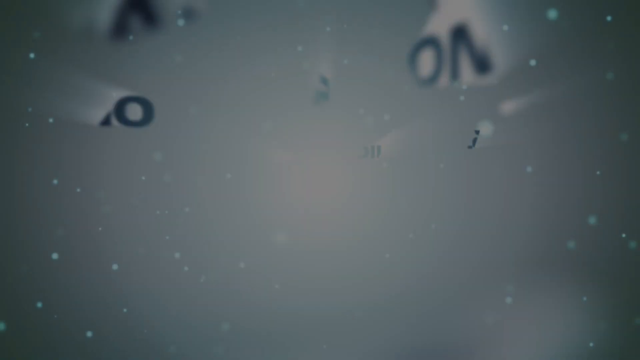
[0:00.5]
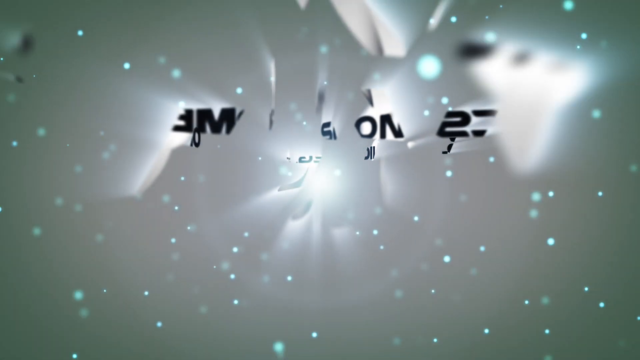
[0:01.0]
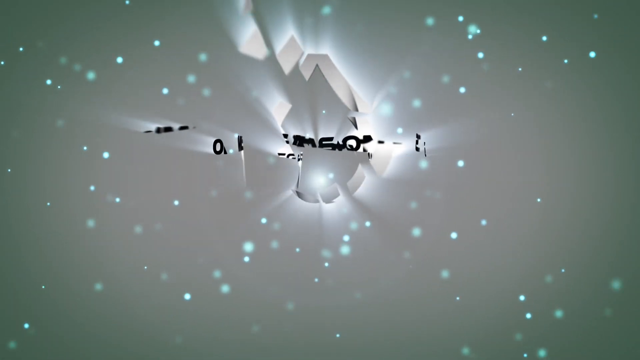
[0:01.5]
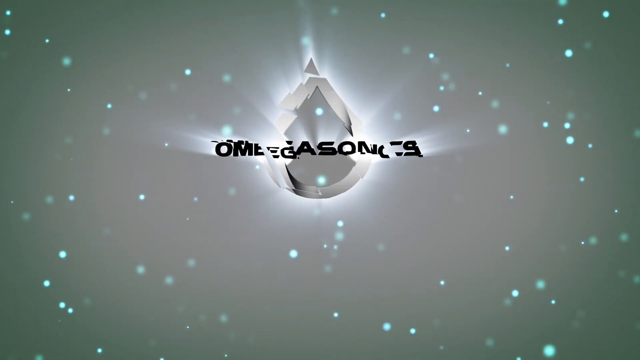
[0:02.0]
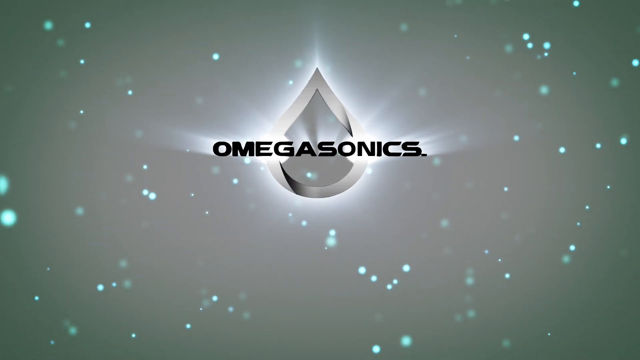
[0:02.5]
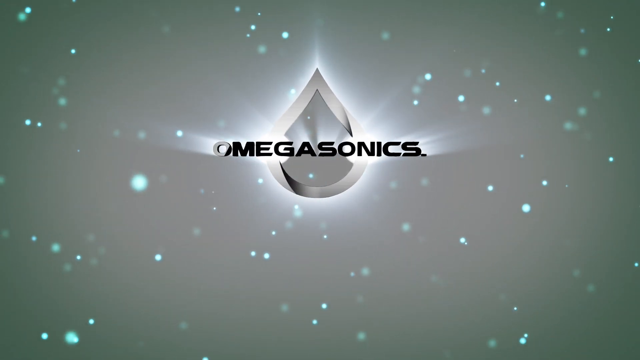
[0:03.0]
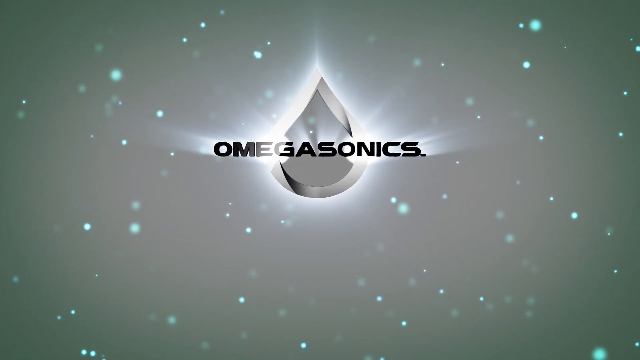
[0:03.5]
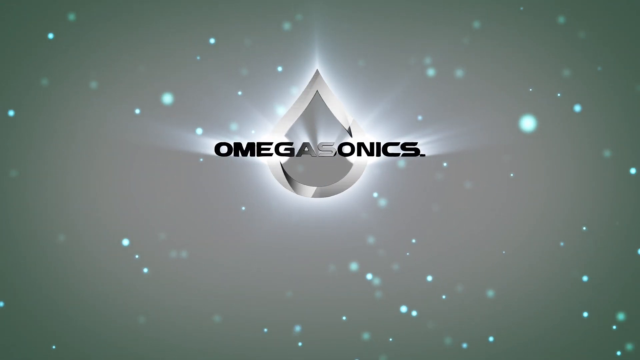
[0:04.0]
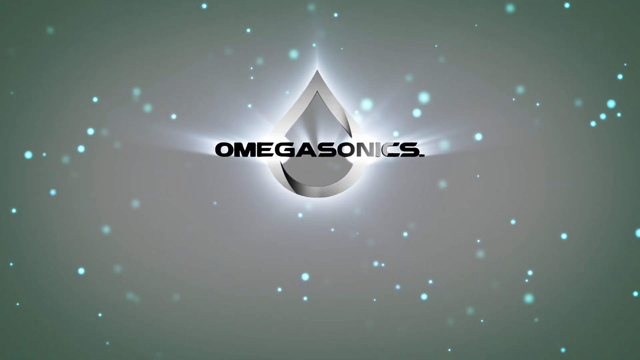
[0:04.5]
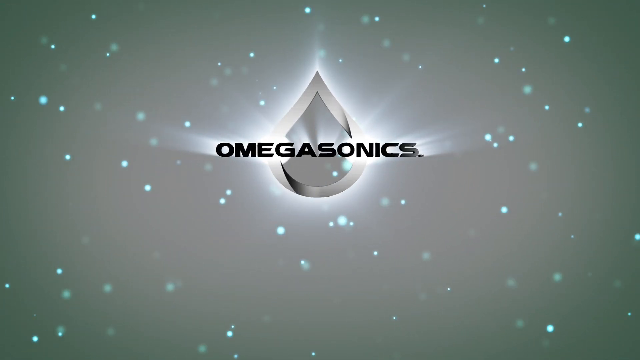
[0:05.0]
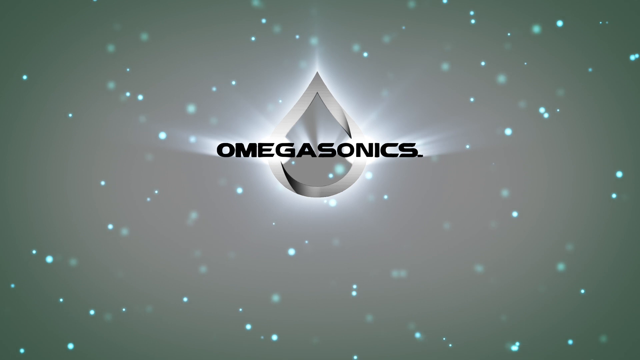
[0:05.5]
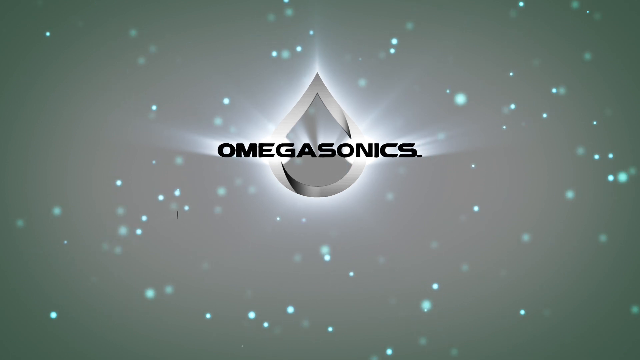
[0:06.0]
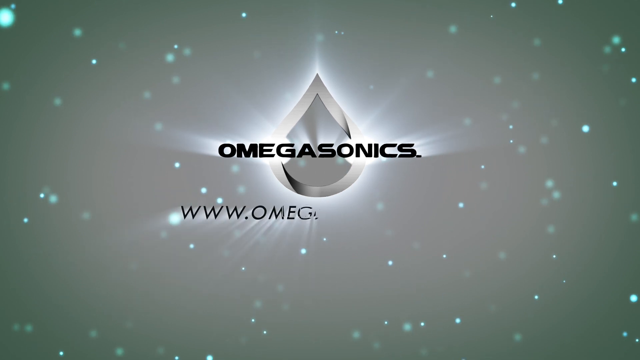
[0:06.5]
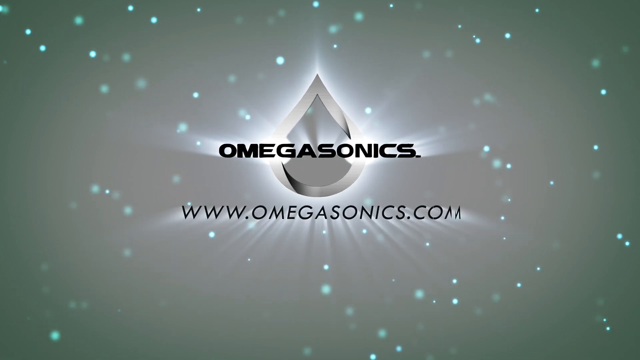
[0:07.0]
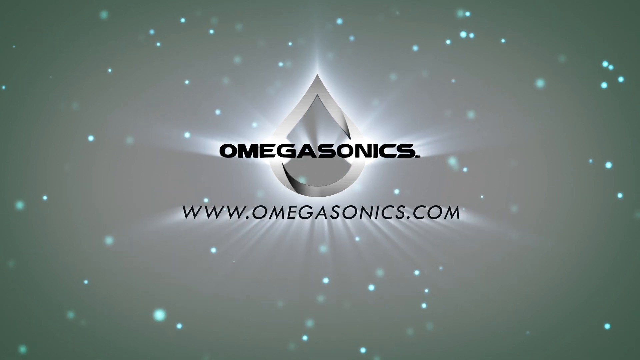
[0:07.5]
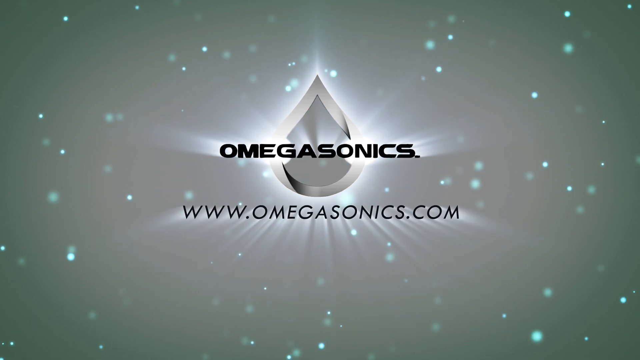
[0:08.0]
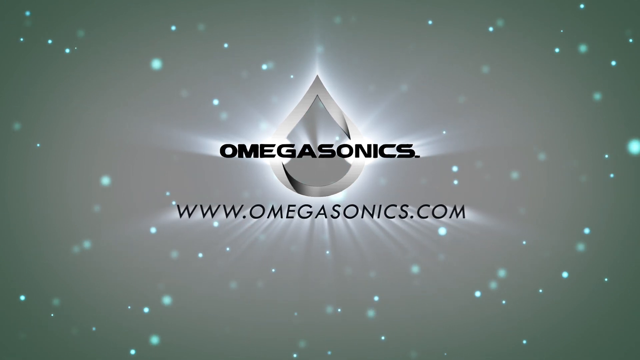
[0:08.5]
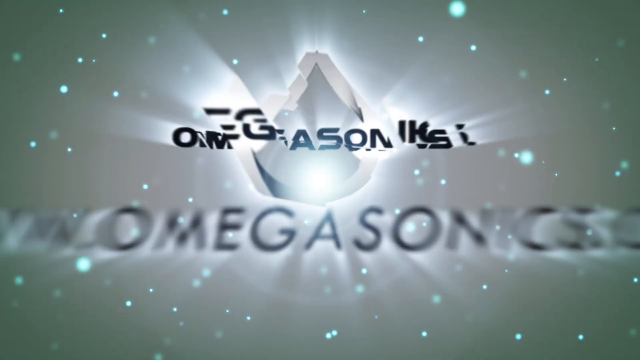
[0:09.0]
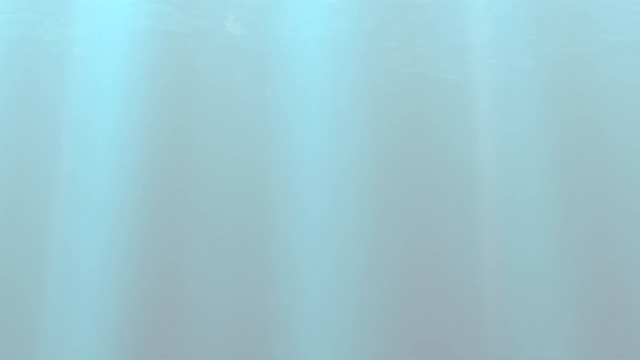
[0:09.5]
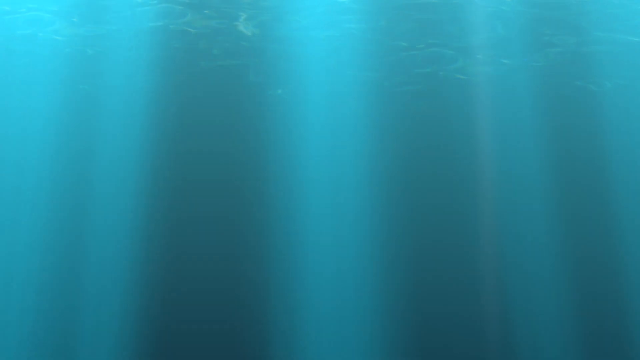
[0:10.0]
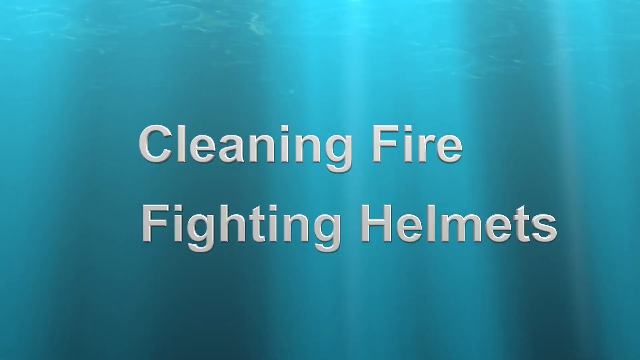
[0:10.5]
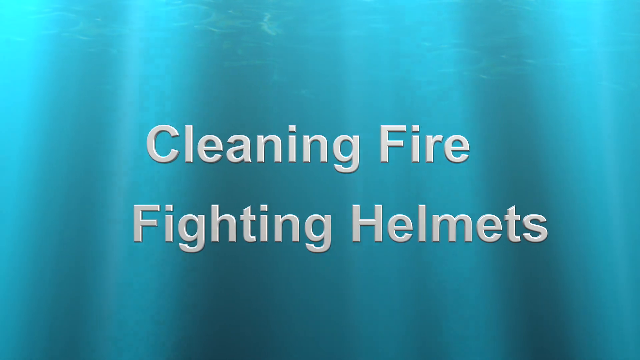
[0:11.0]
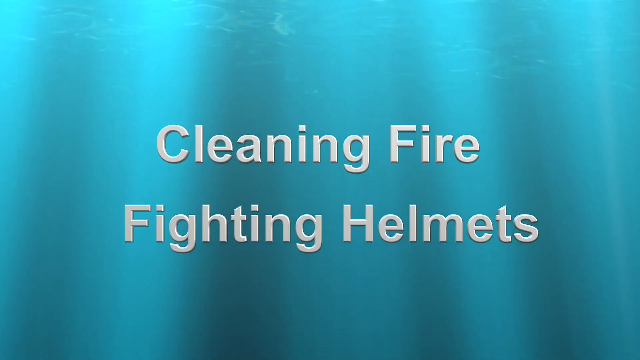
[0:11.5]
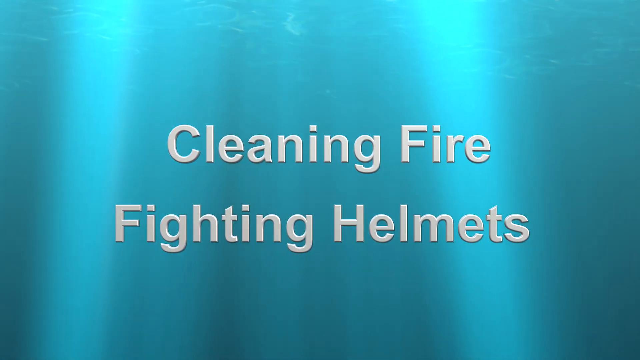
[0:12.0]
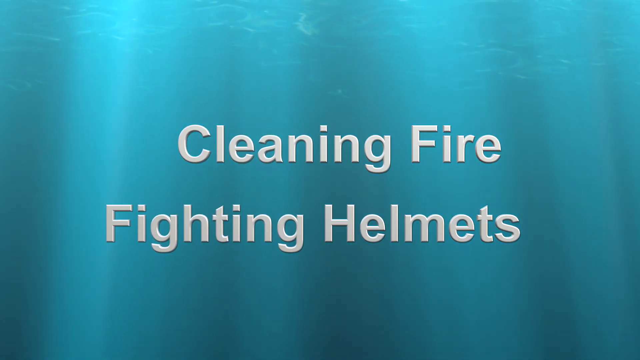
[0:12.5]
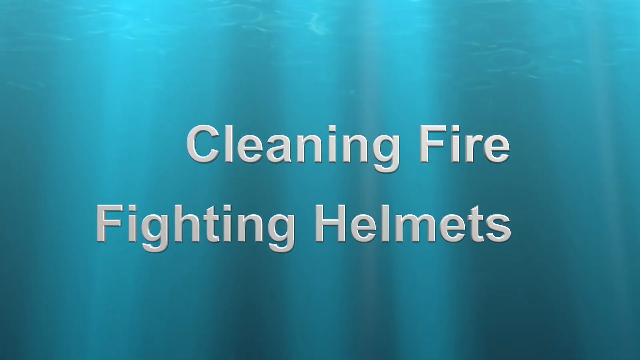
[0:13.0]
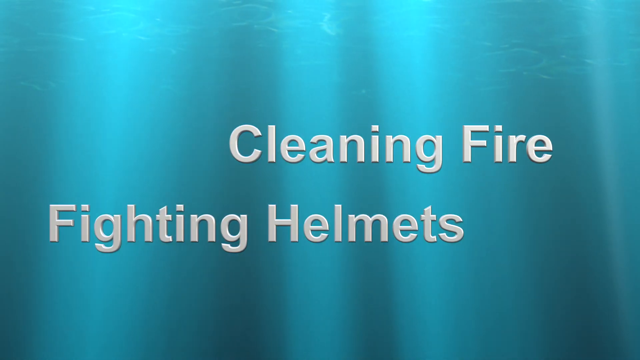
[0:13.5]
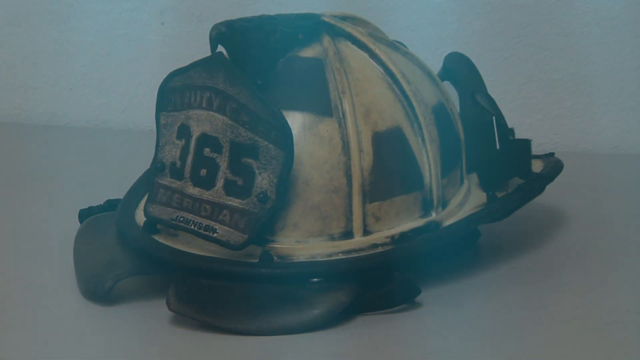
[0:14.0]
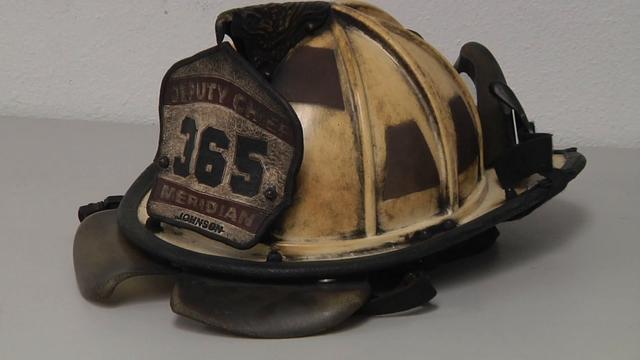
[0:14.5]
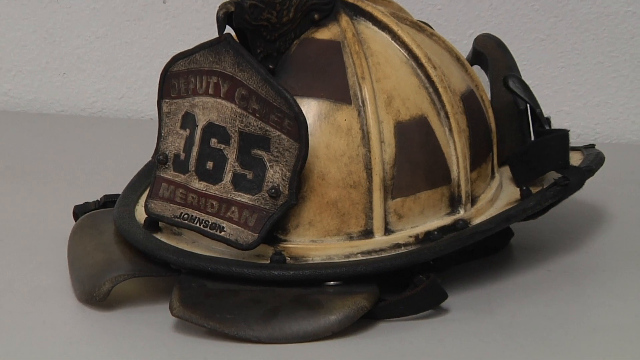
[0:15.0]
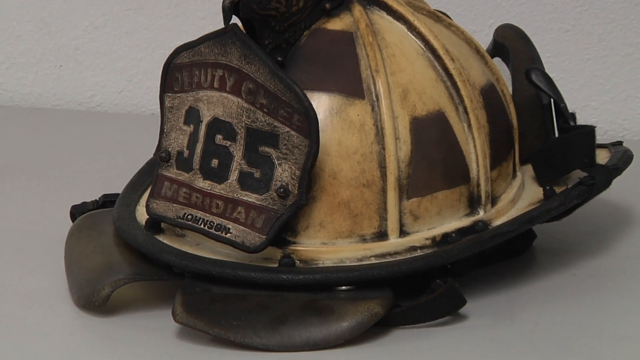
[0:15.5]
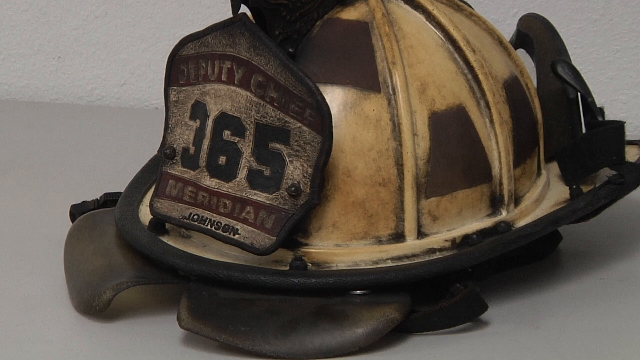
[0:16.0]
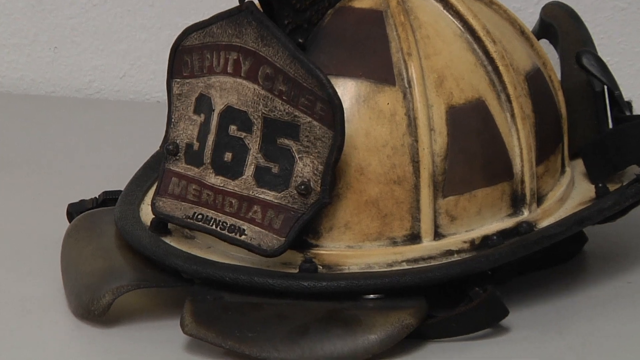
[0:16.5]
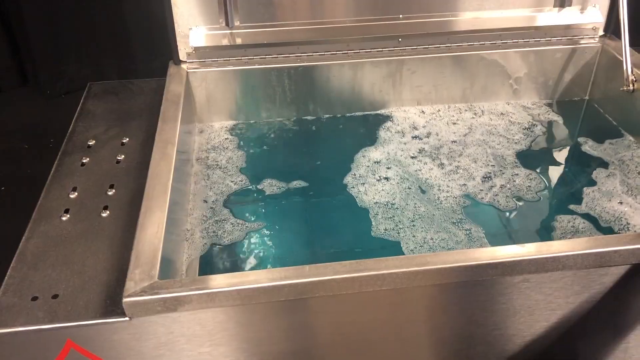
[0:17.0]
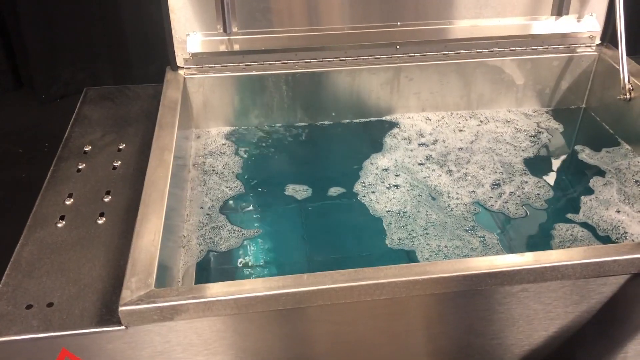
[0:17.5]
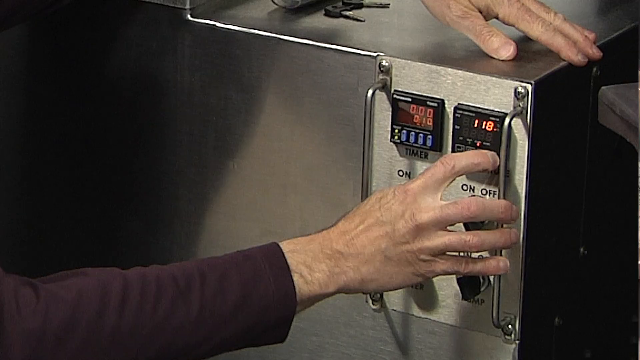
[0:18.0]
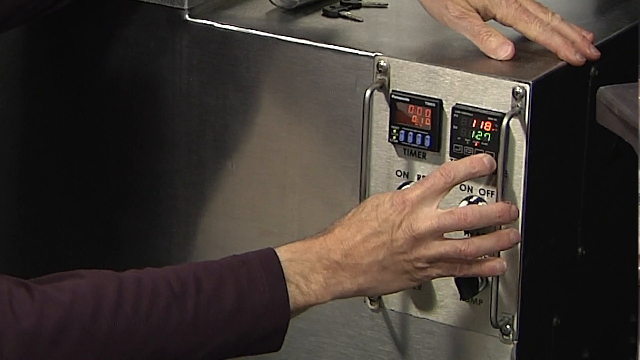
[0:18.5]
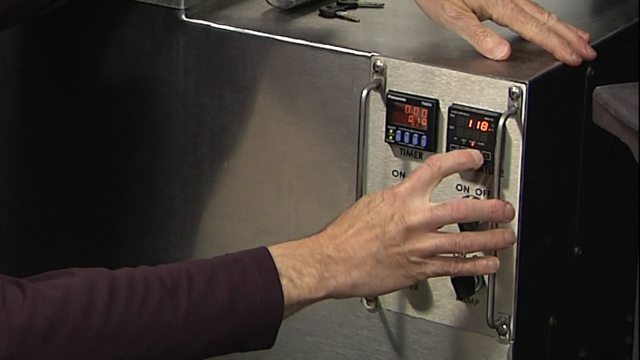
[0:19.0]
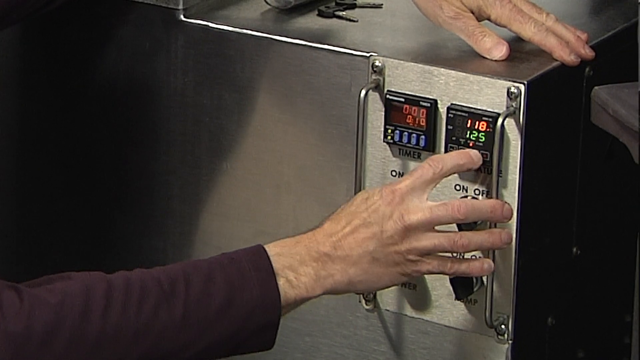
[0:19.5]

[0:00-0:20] A silver teardrop shape is in the center of the screen with light emitting out behind it, and the name "OmegaSonics" is written in black across it. The logo is surrounded by aqua-colored blue dots that move on the screen. The background is an orange shade that goes from a grayish aqua at the outer edges to an almost pink inside. The address "www.omegasonics.com" comes onto the screen below the logo. Next, a screen appears that looks like blue underwater with light filtering from above, with smoke across the top of the screen, and the text "Cleaning firefighting helmets" is on the screen, moving. An image follows of a dirty yellow firefighter helmet covered with soot and smoke, with a close-up on text that says "Deputy Chief Meridian" and black numbers reading "365". The video then goes to a shot of a machine with a square area full of bubbling liquid, then changes to a scene of a woman's hands pressing buttons on a digital display on the front of the machine while the left hand rests on top of the silver machine.